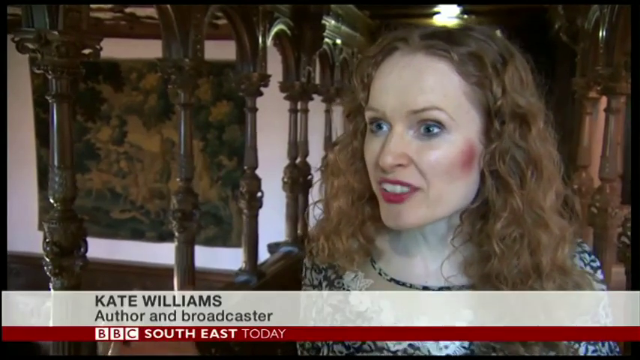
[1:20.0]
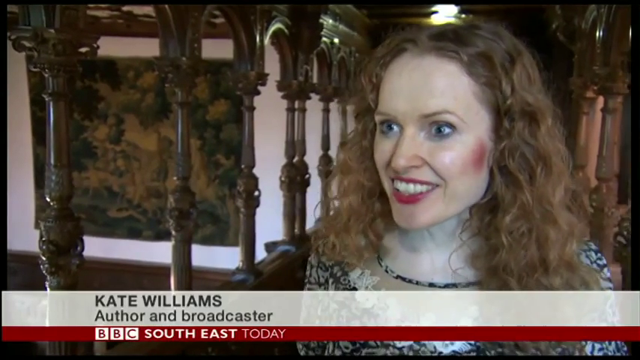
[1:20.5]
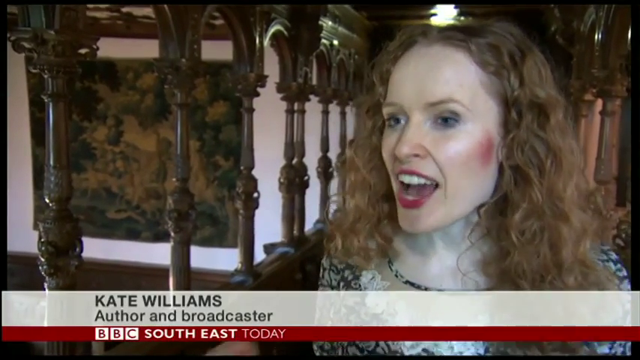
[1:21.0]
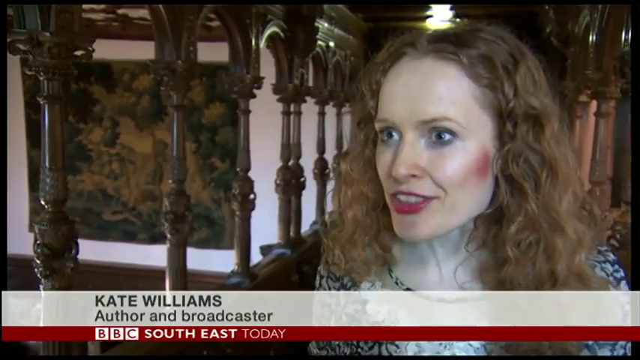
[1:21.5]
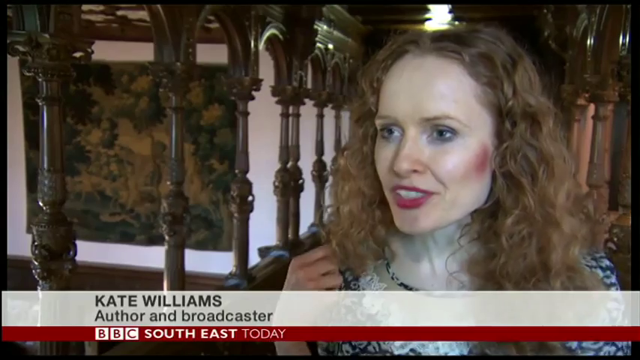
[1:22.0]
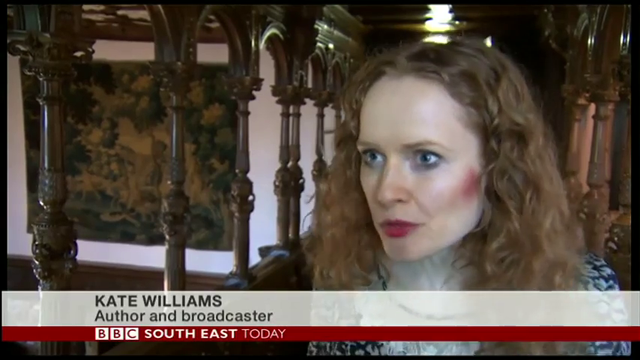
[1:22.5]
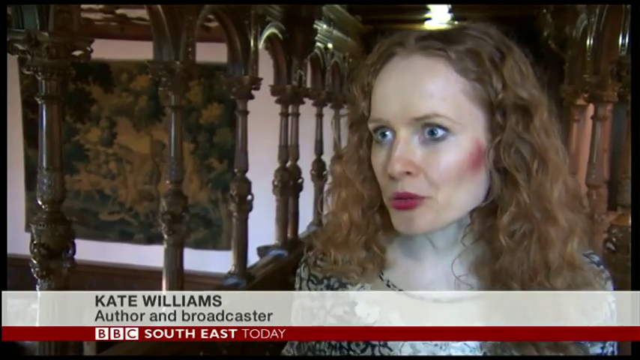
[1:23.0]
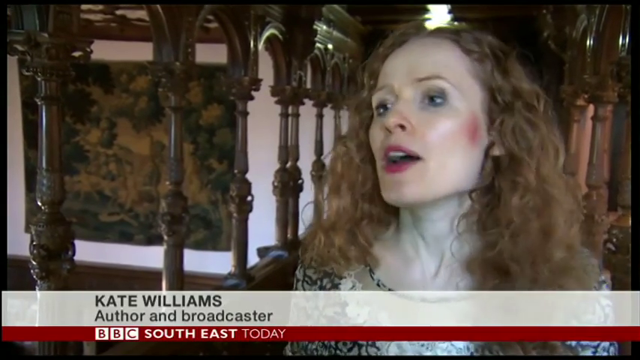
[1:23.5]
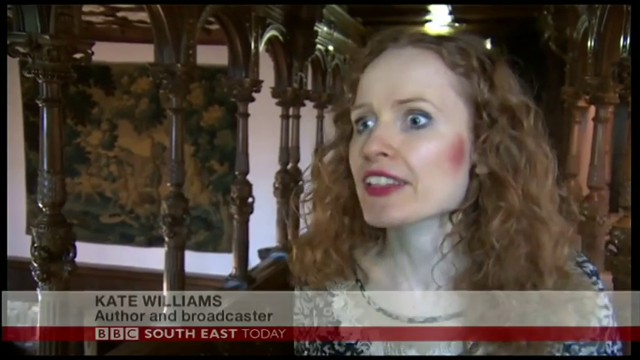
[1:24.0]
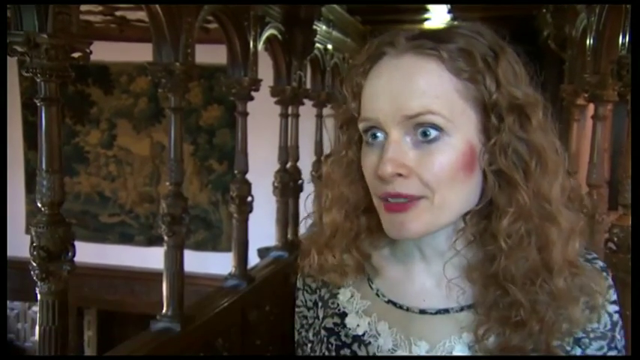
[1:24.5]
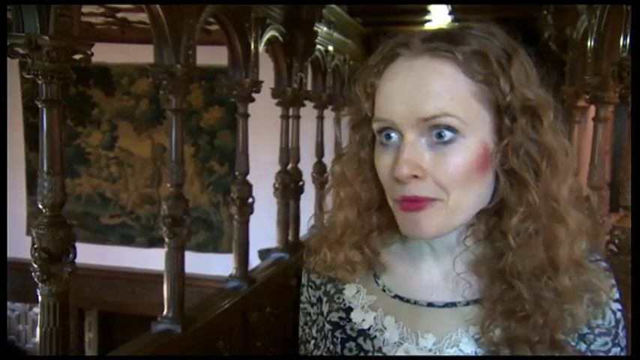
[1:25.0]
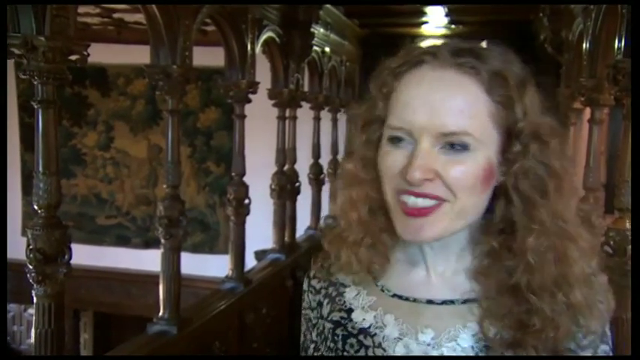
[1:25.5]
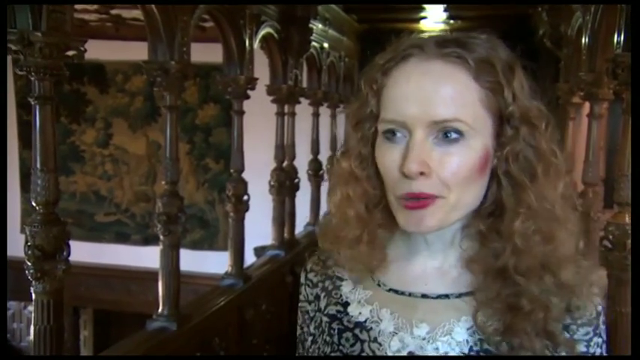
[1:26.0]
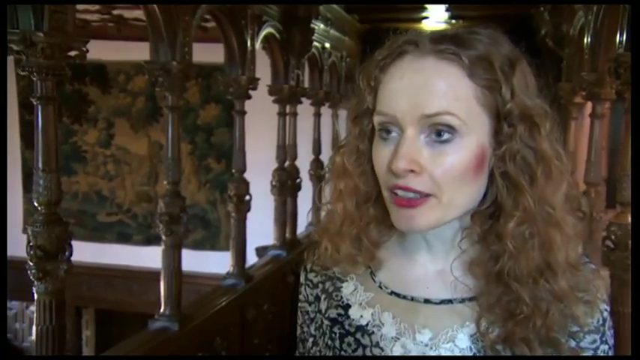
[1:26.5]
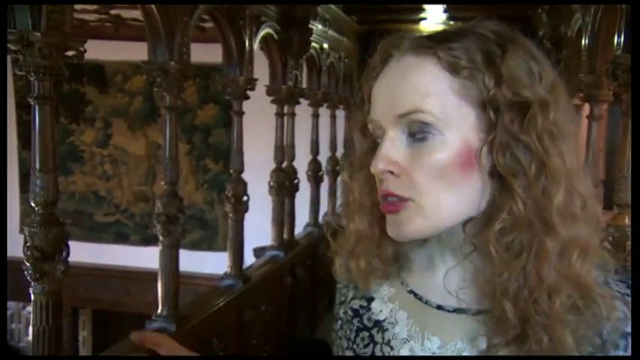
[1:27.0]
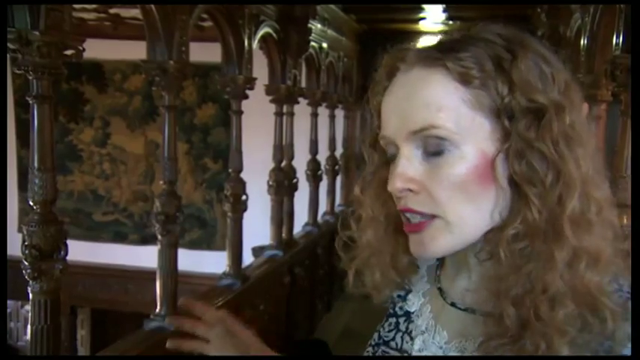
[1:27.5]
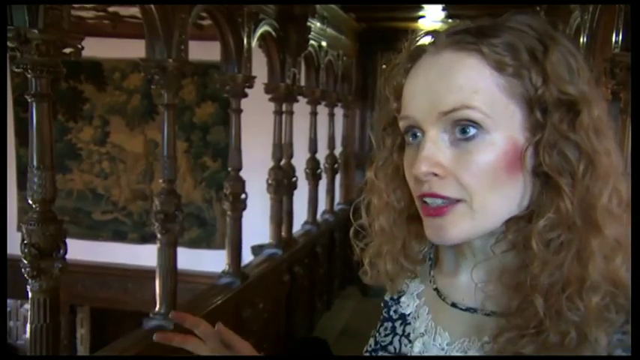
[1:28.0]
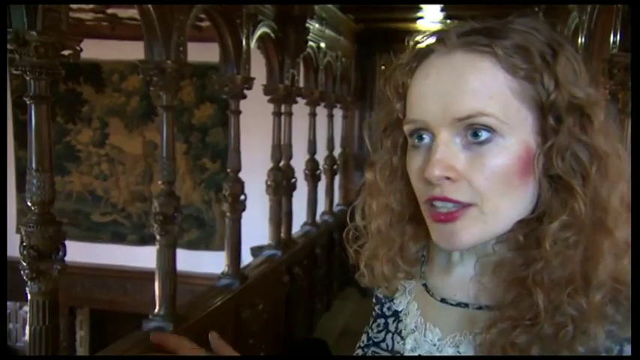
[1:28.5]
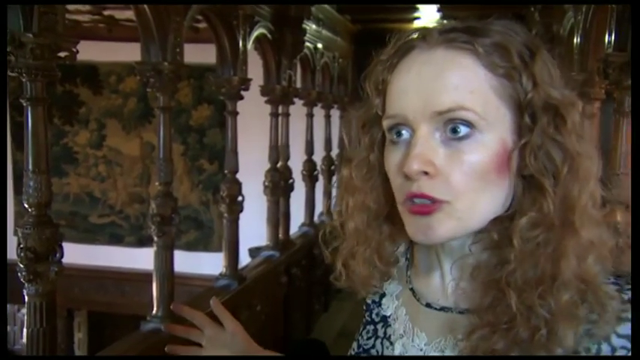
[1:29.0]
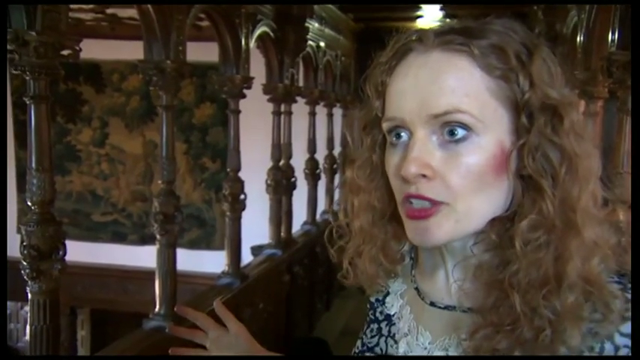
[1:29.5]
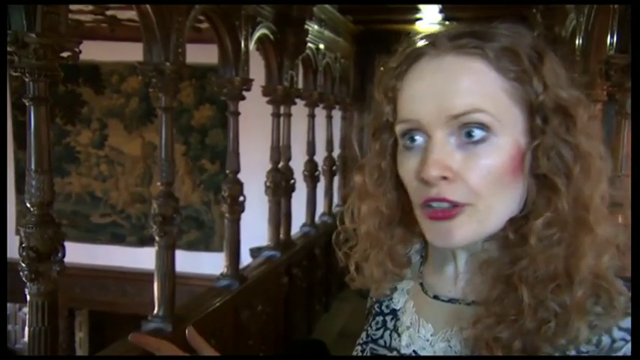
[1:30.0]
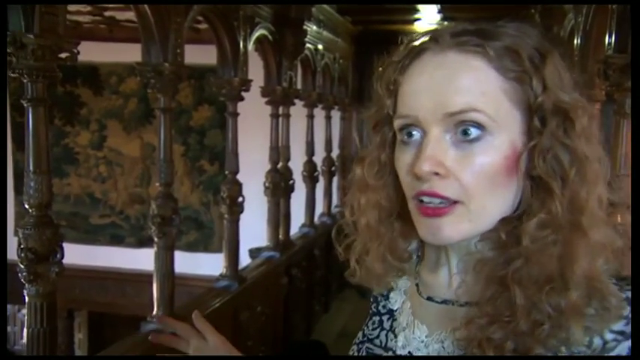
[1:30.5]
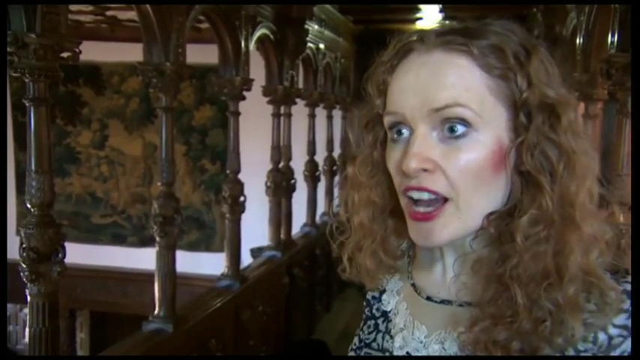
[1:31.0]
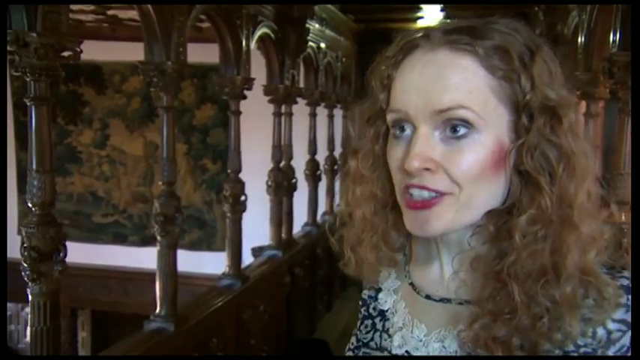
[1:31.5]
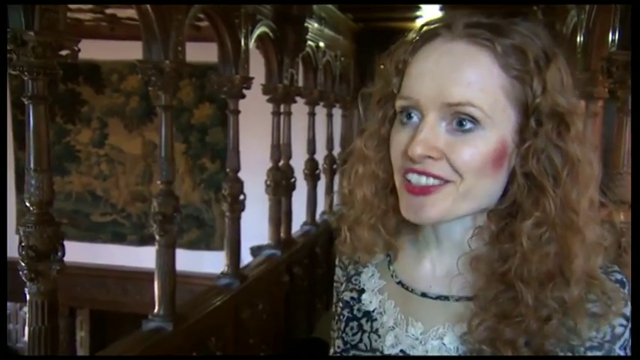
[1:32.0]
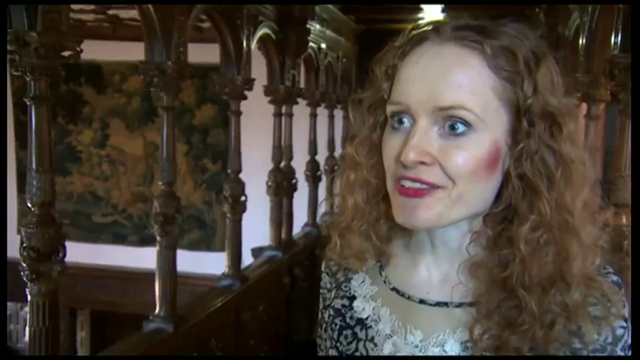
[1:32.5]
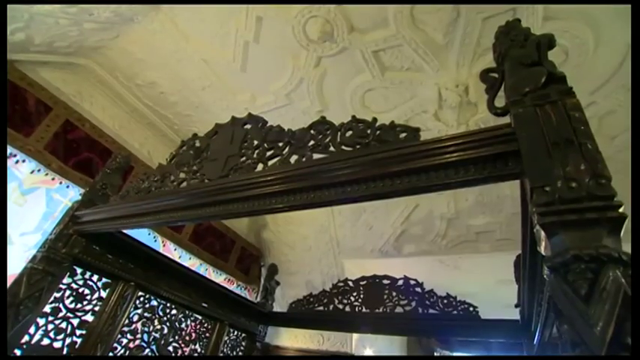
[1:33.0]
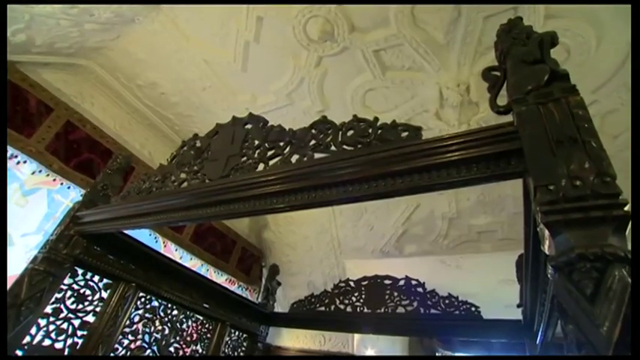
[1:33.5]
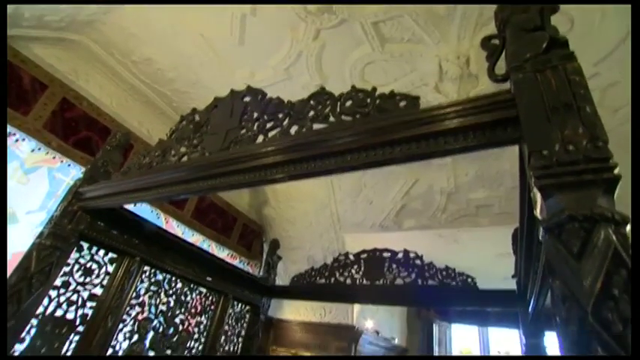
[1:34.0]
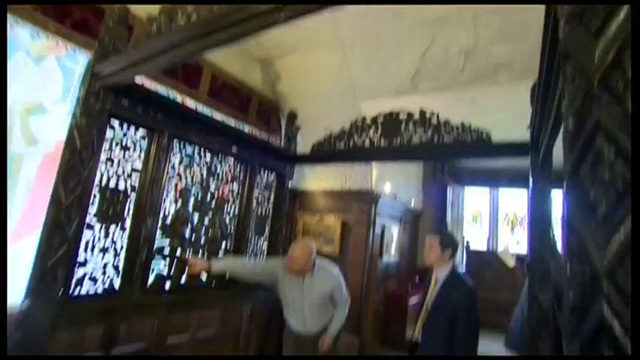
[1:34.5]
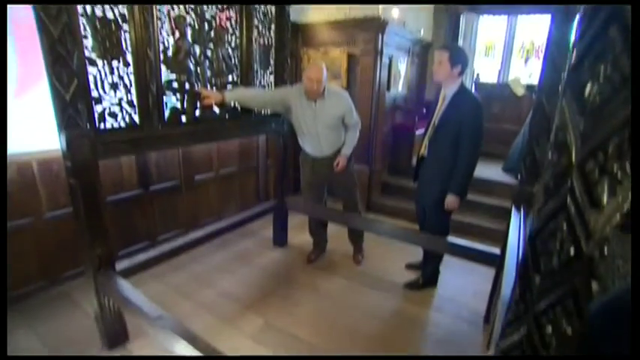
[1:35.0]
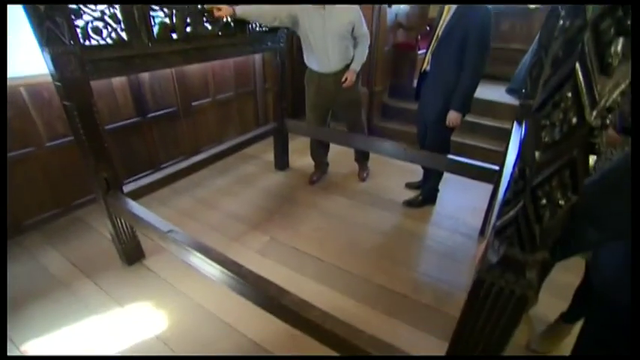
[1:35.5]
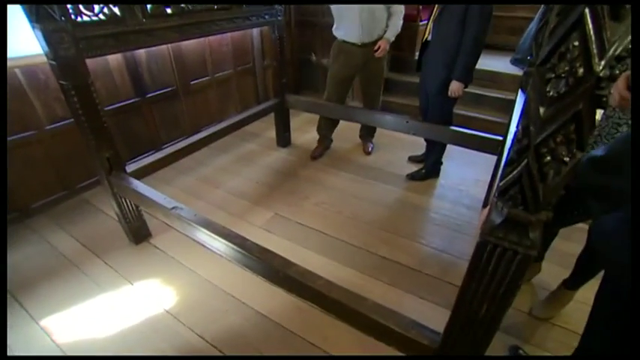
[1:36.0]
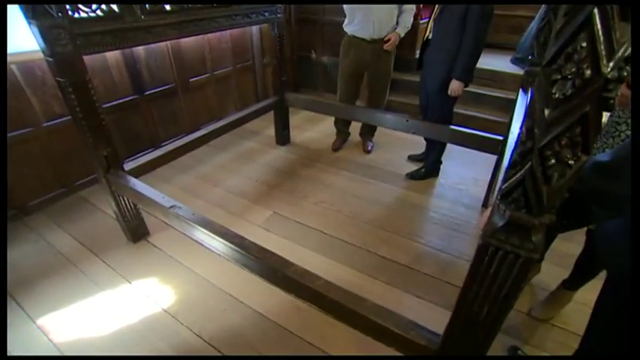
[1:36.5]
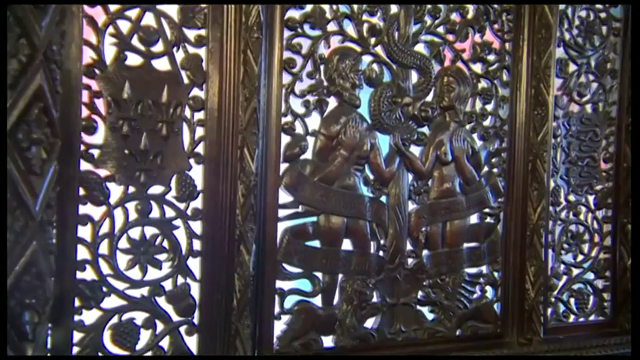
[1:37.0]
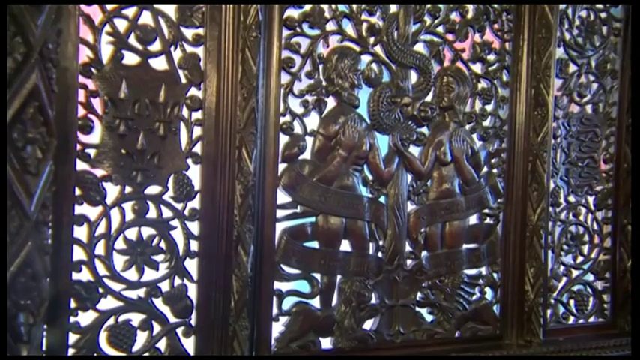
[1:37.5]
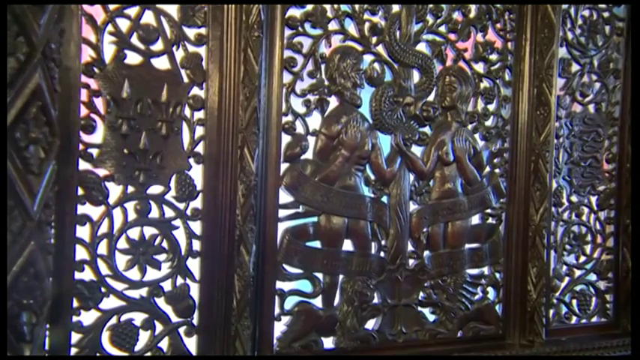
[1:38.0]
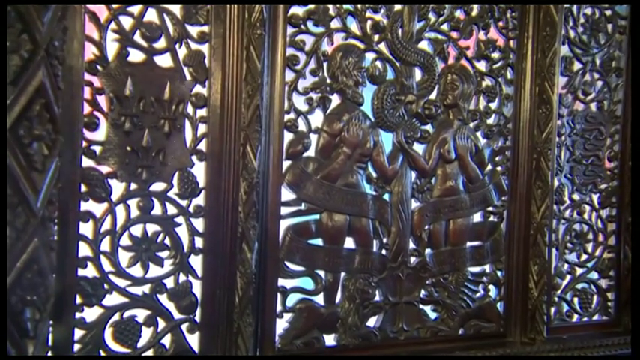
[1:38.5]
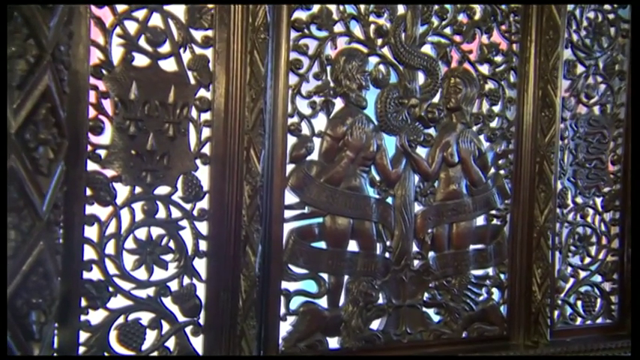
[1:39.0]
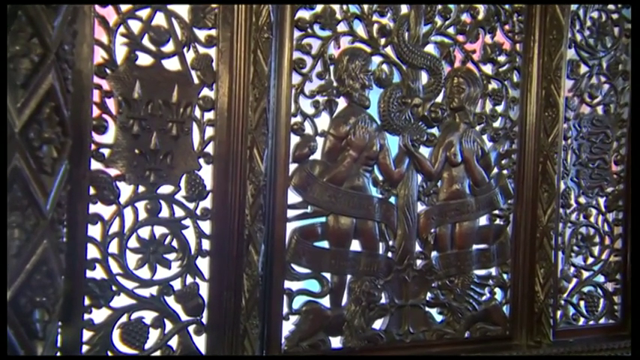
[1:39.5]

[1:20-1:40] A woman is identified as "Kate Williams, author and broadcaster, BBC South East Today". The architecture and design are shown, including what seems to be a page with a lot of design that appears to be handmade.